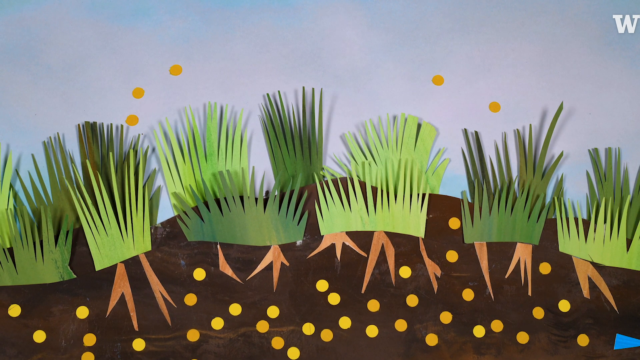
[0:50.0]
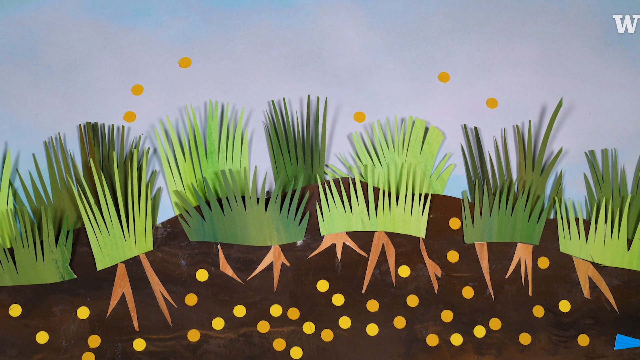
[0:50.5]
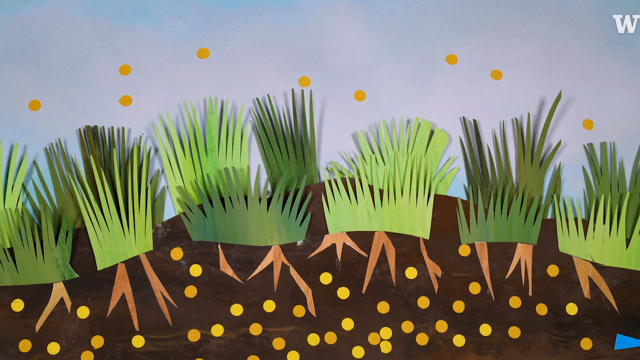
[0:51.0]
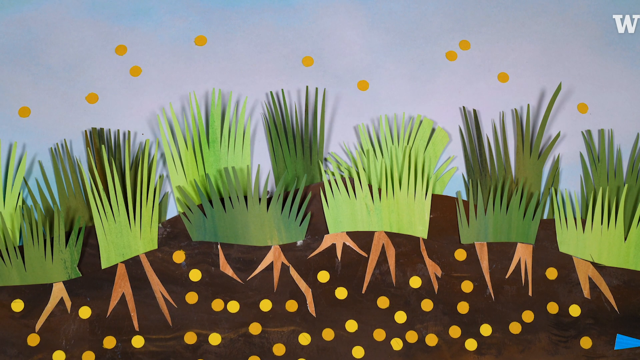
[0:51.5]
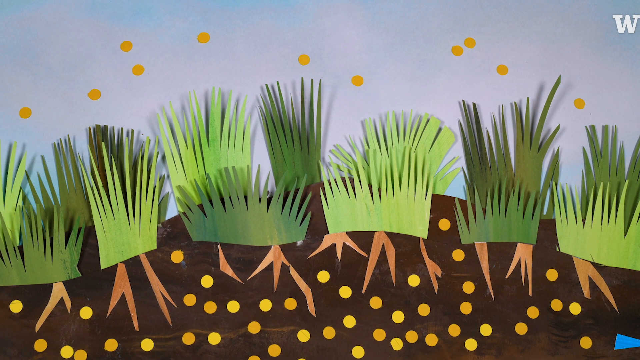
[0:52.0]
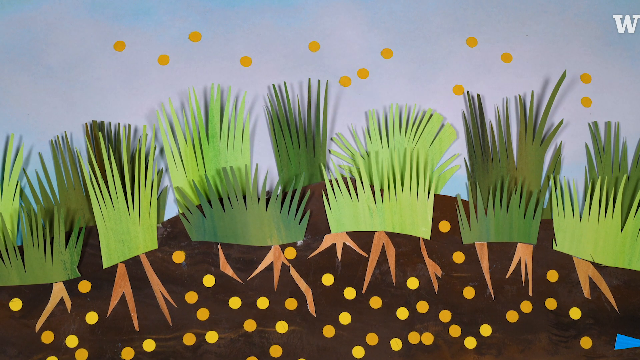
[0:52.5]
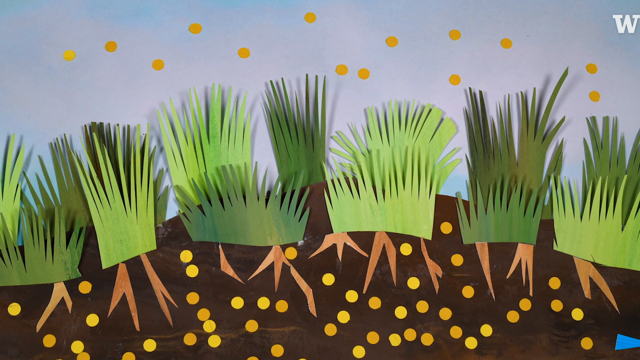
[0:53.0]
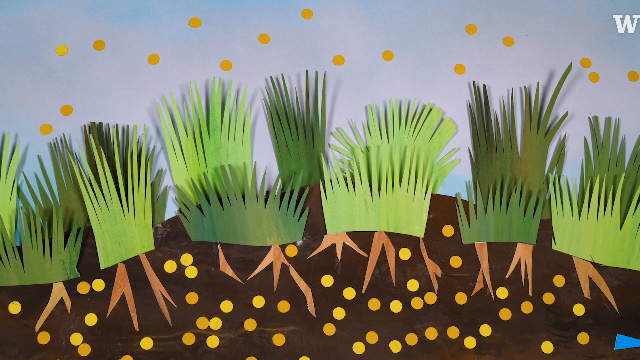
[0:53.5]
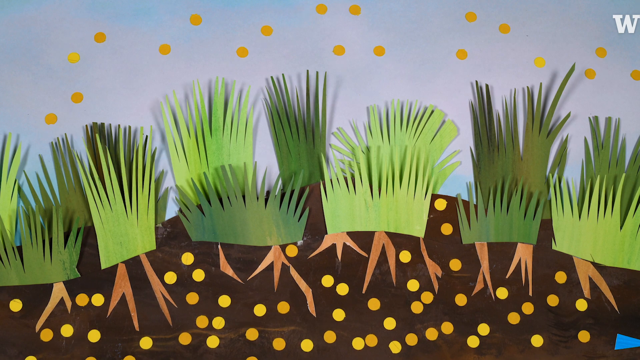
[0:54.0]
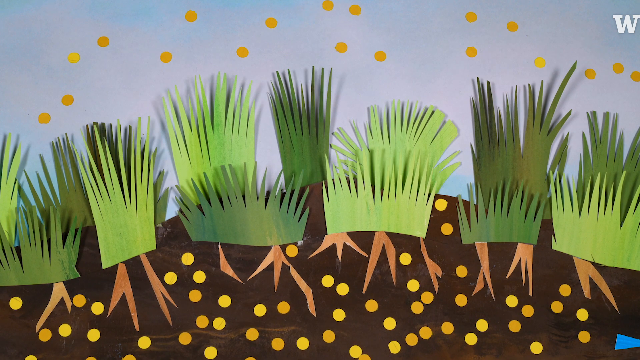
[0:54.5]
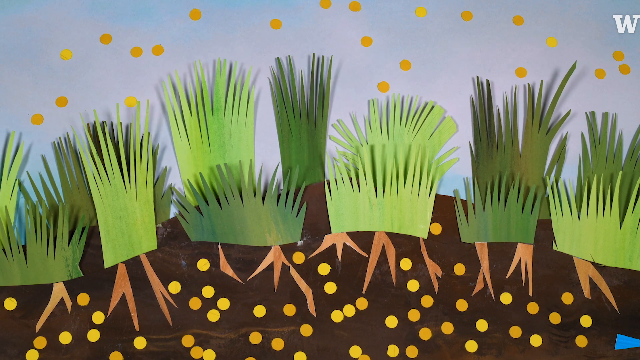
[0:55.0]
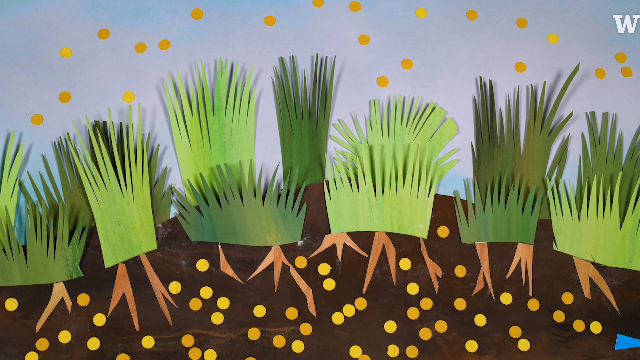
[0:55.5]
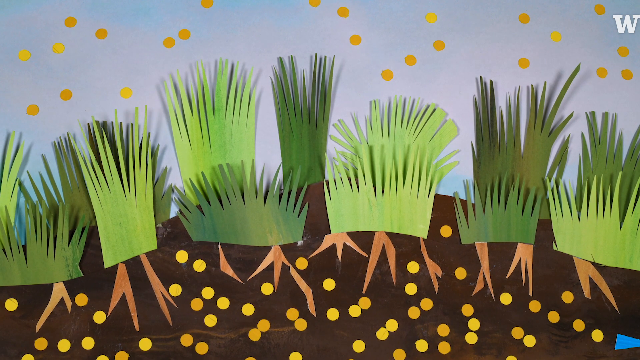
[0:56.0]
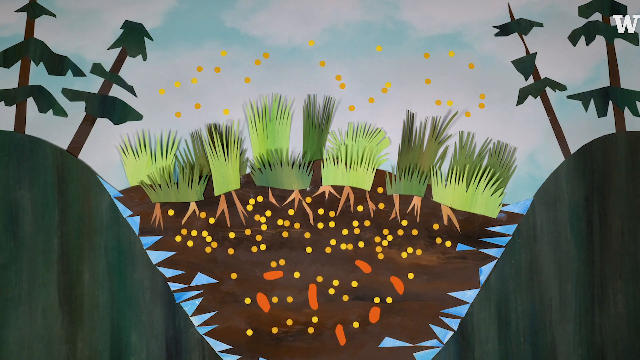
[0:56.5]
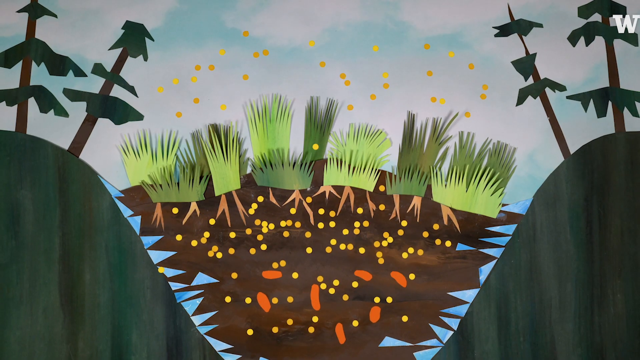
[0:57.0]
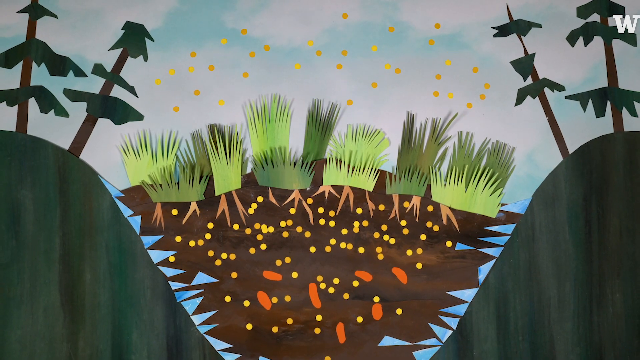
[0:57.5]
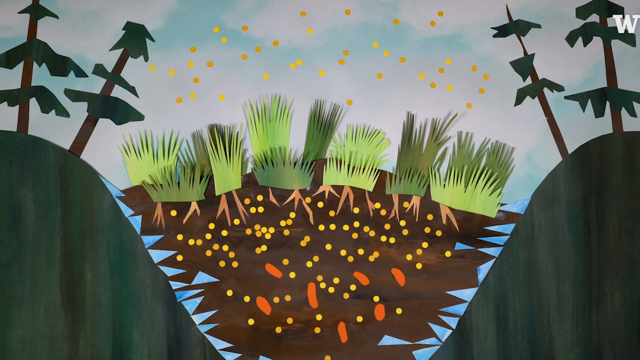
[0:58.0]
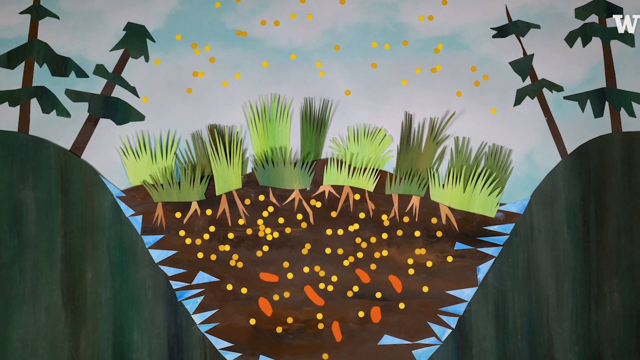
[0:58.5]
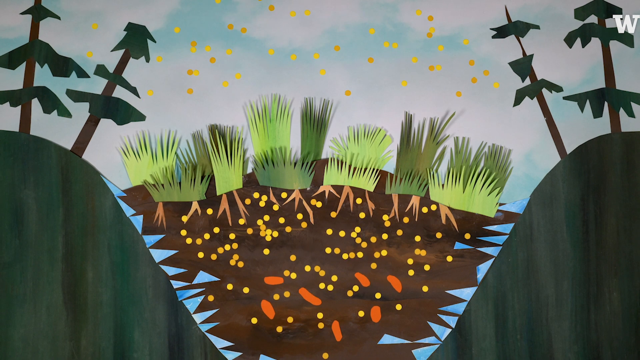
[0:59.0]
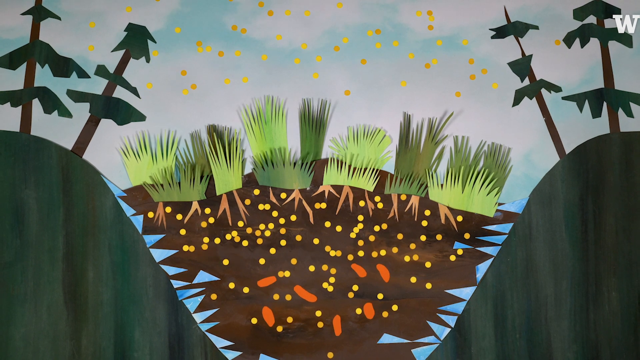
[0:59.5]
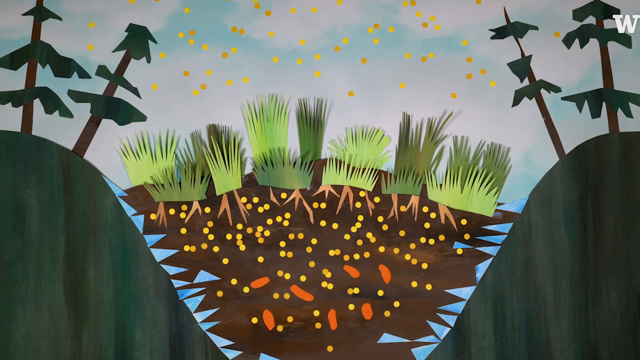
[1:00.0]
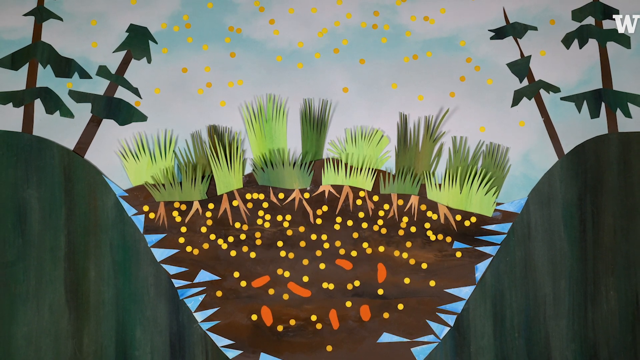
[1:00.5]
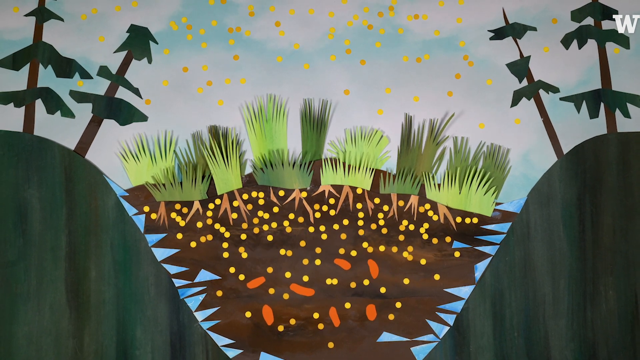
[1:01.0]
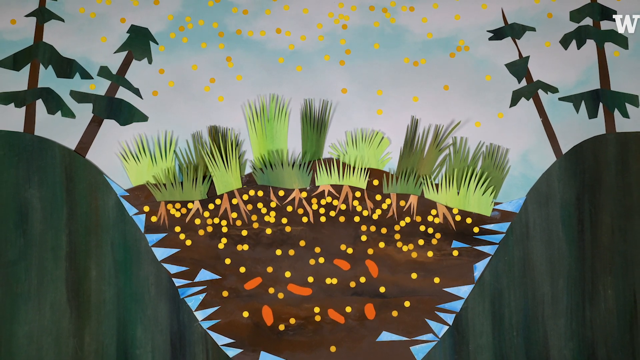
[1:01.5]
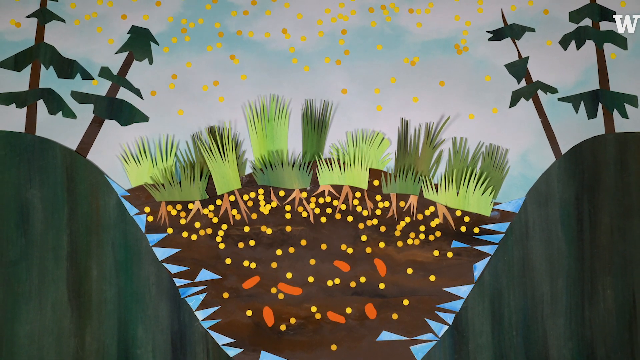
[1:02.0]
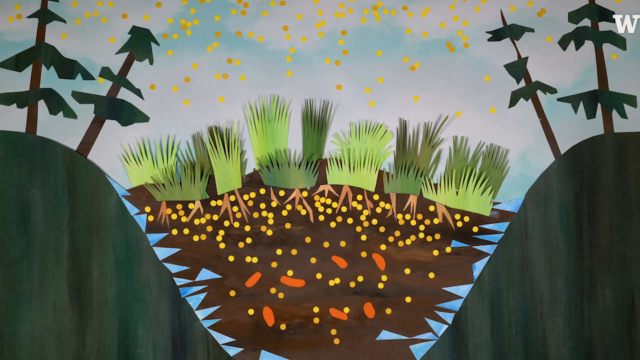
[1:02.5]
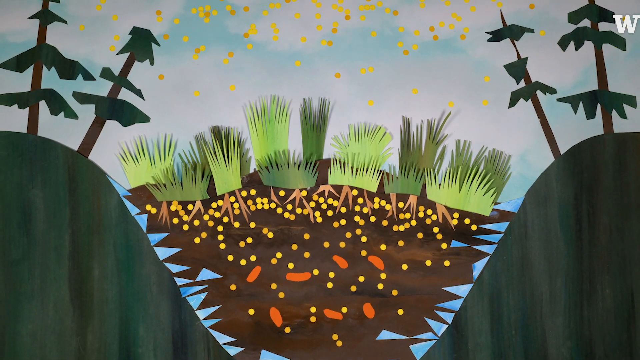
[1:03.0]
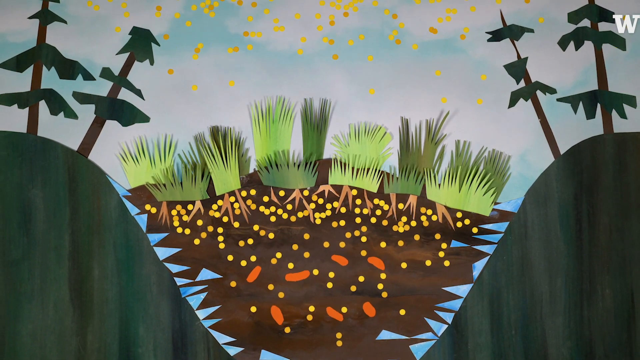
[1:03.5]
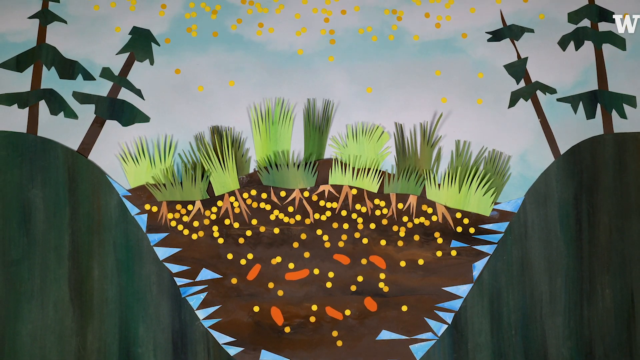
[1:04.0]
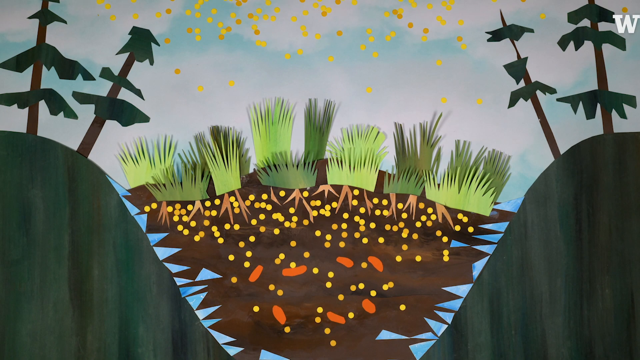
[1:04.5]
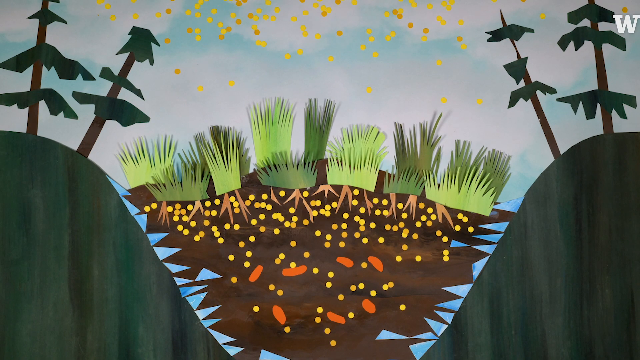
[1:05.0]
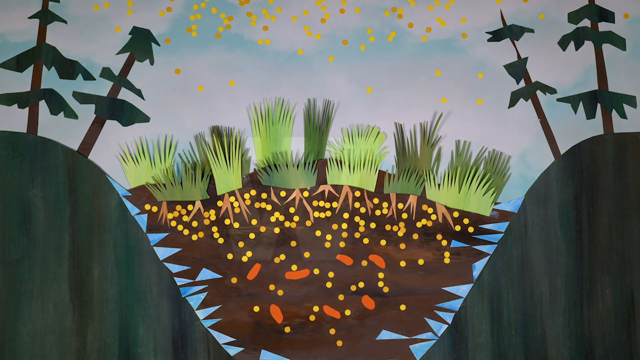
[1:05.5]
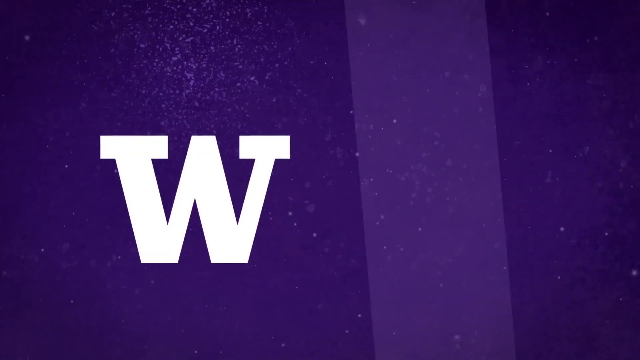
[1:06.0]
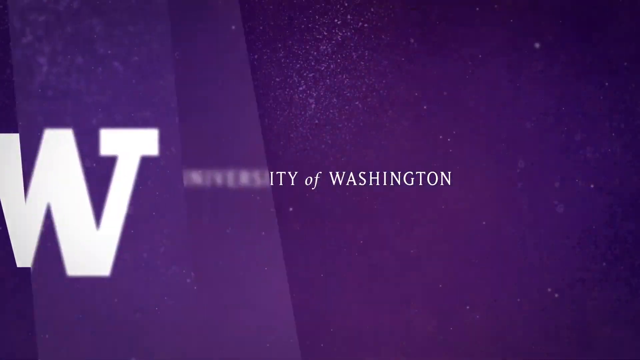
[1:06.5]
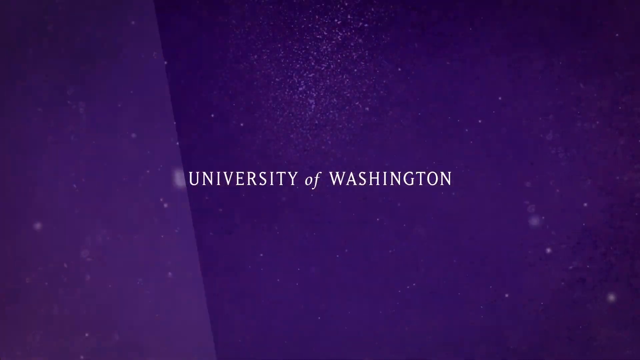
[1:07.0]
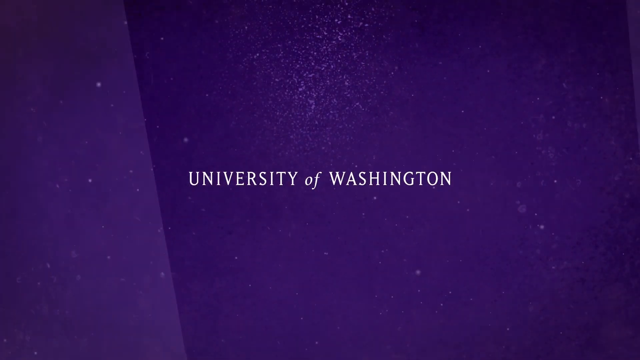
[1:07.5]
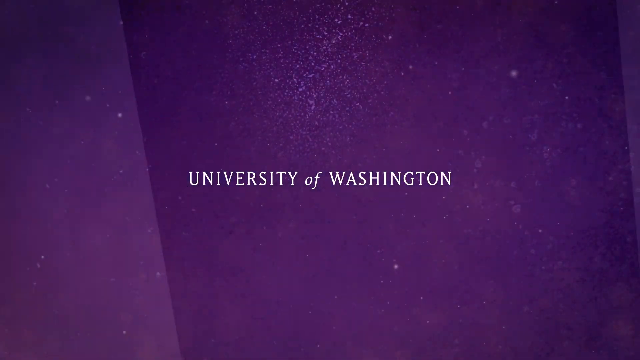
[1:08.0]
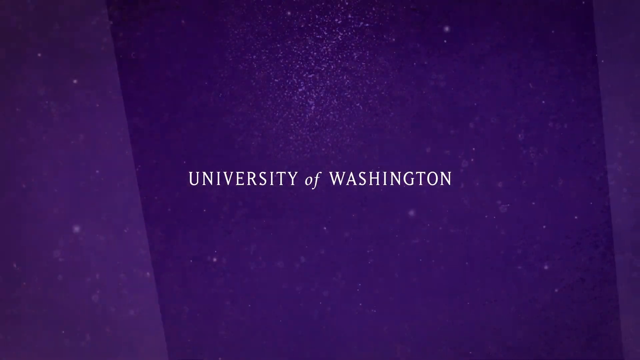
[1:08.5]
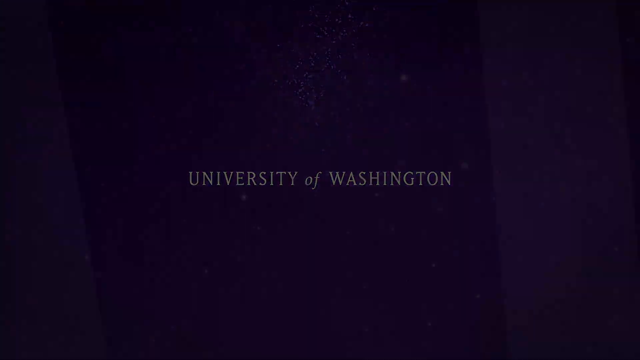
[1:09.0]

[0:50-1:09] The illustration continues, showing more water going into the soil, the soil getting wetter and its humidity increasing. Seeds are planted, and as the humidity rises they start growing. Many of them are seen growing up, and the plants all grow well where water is available.